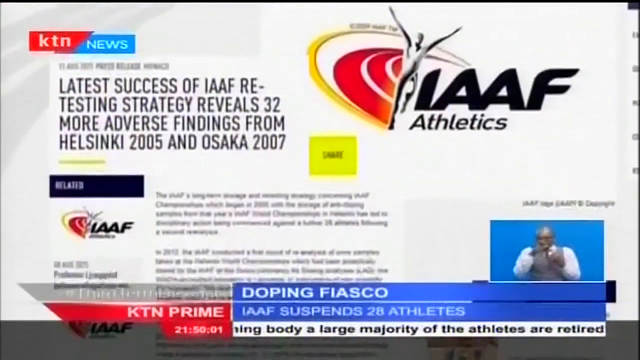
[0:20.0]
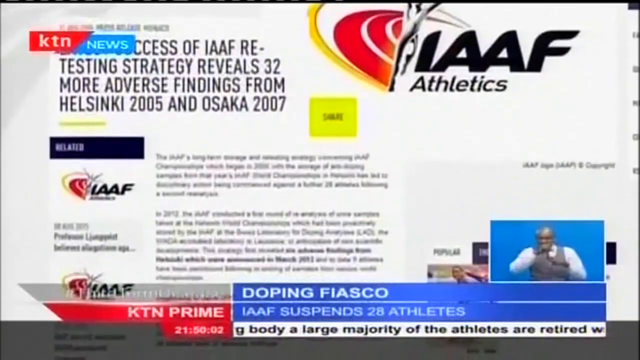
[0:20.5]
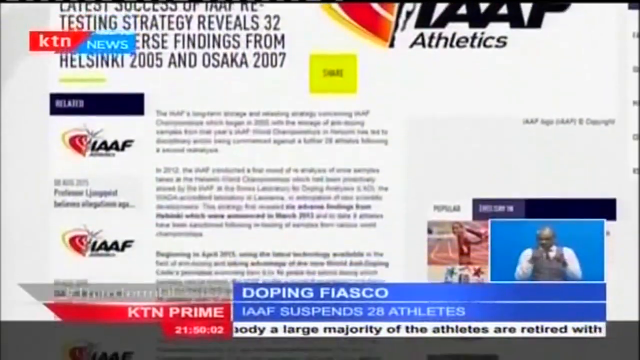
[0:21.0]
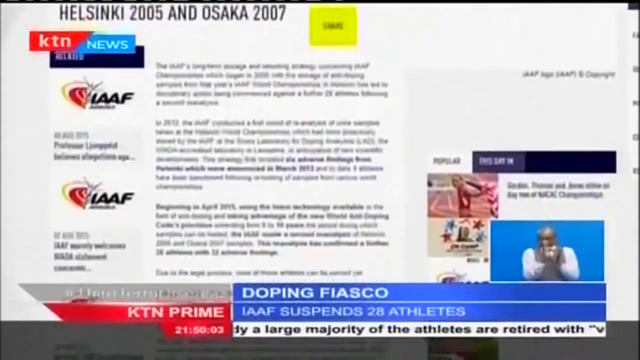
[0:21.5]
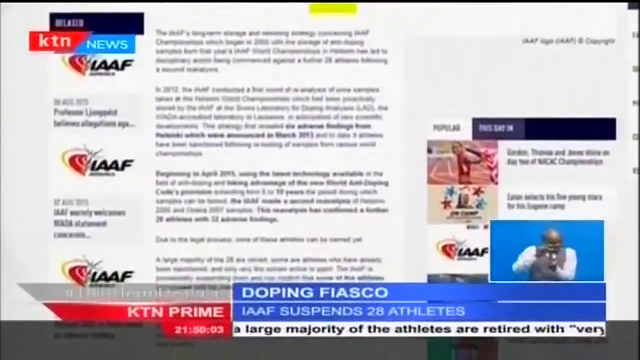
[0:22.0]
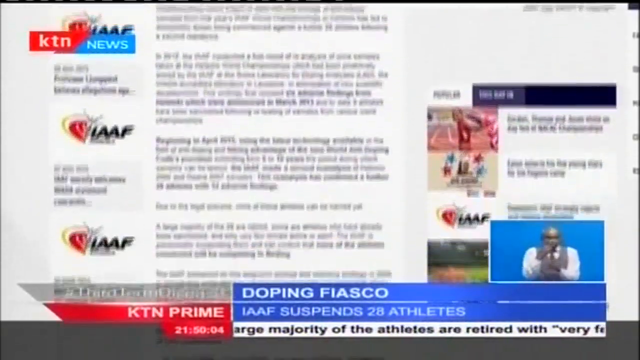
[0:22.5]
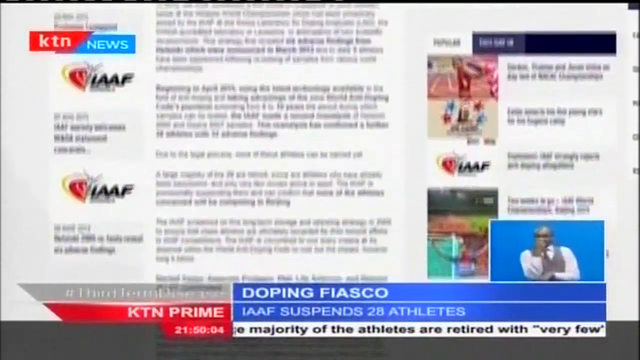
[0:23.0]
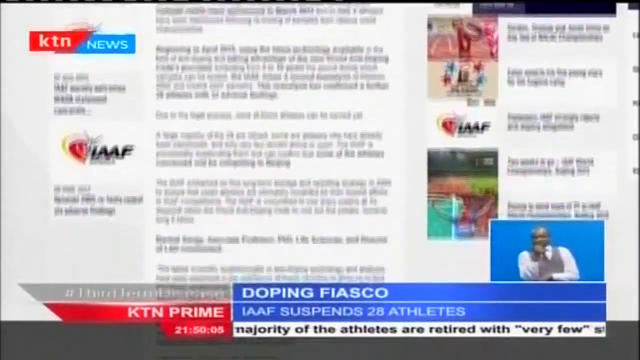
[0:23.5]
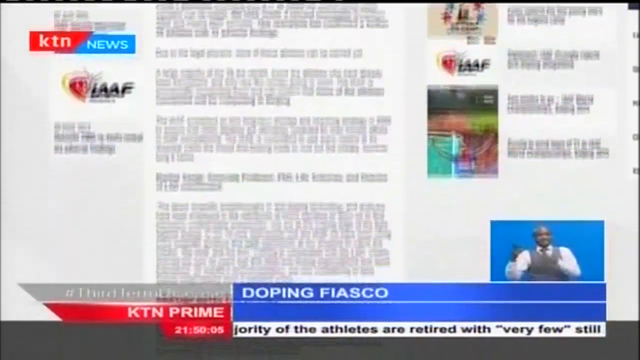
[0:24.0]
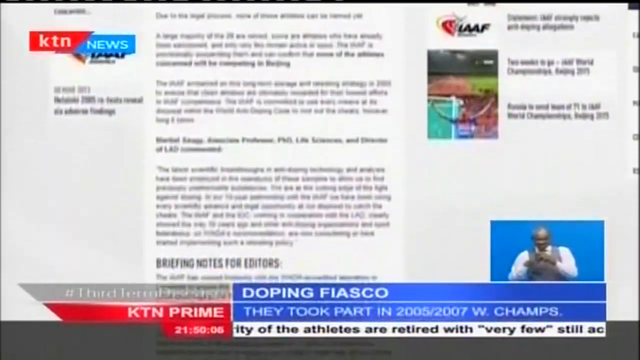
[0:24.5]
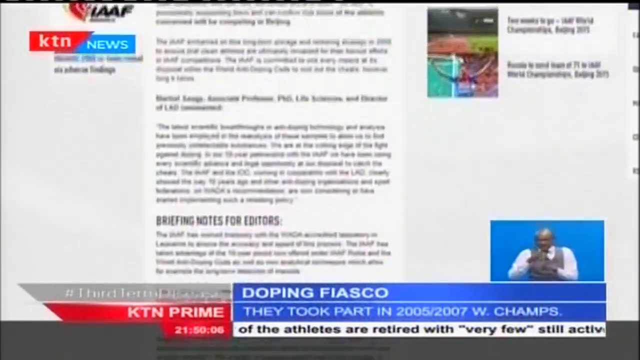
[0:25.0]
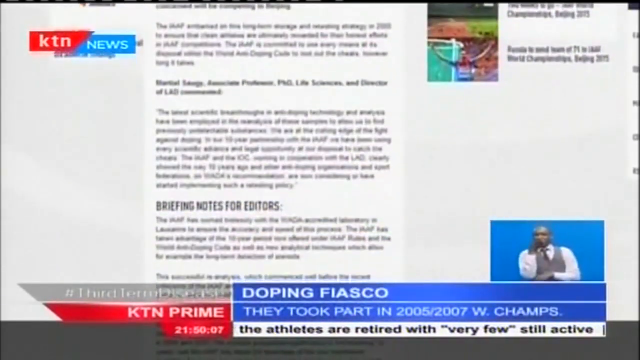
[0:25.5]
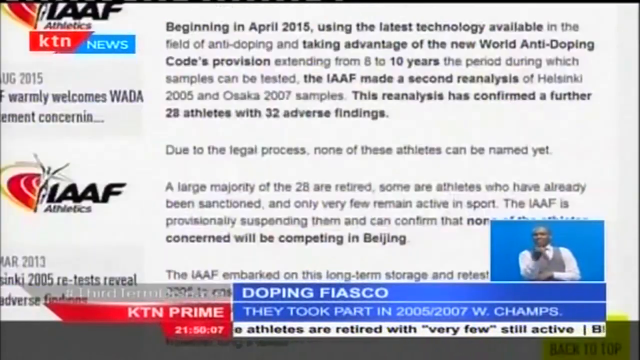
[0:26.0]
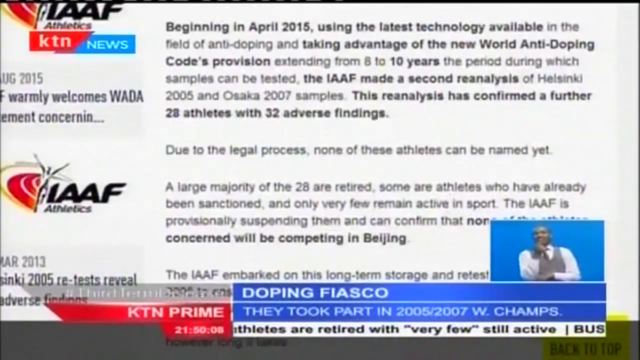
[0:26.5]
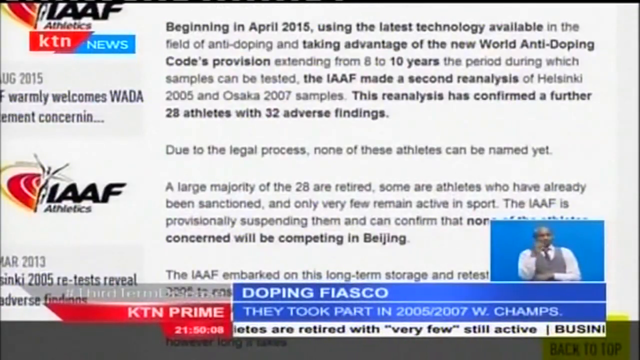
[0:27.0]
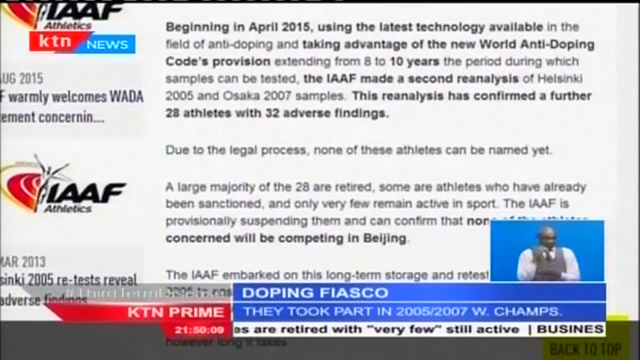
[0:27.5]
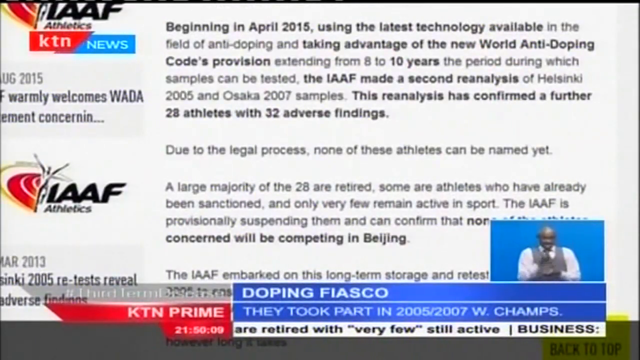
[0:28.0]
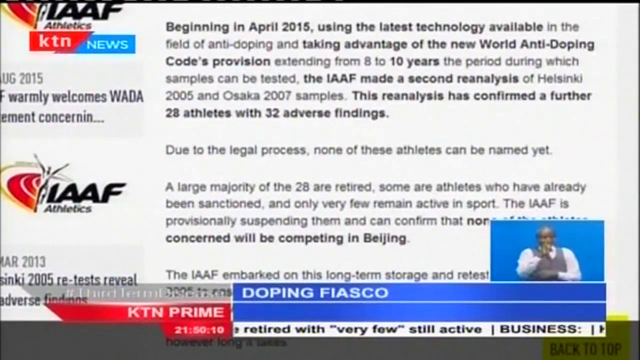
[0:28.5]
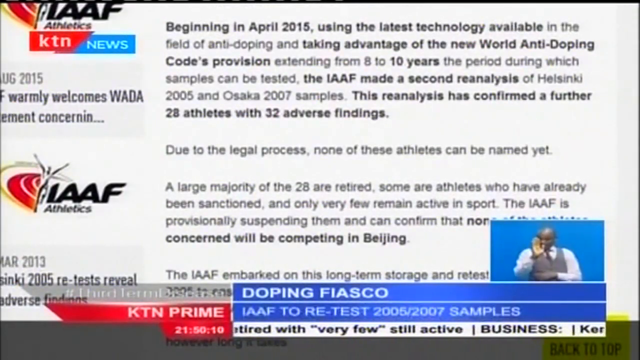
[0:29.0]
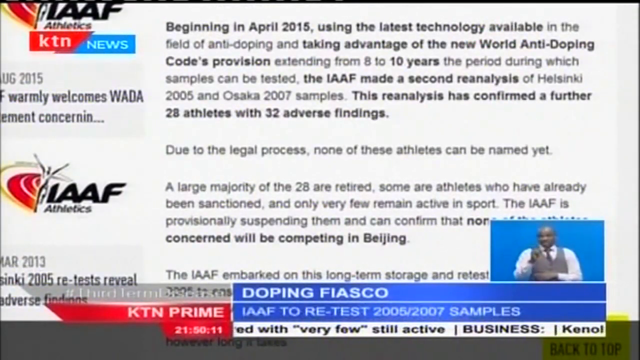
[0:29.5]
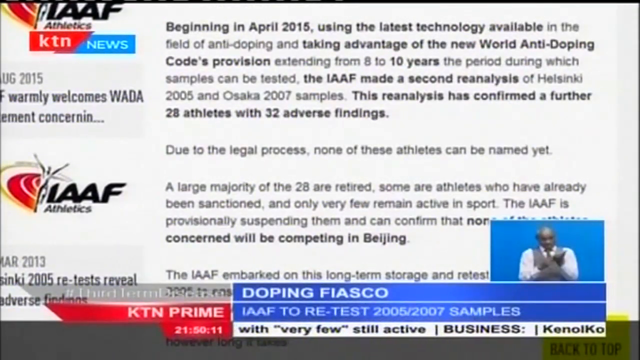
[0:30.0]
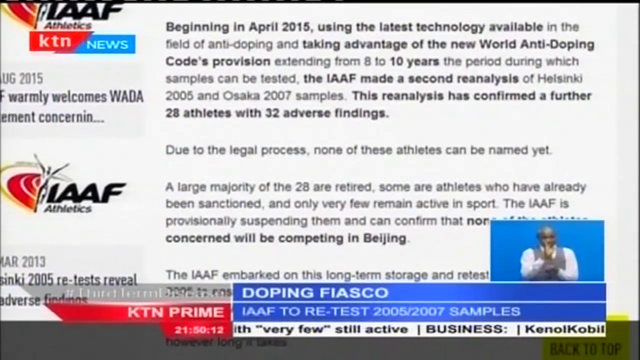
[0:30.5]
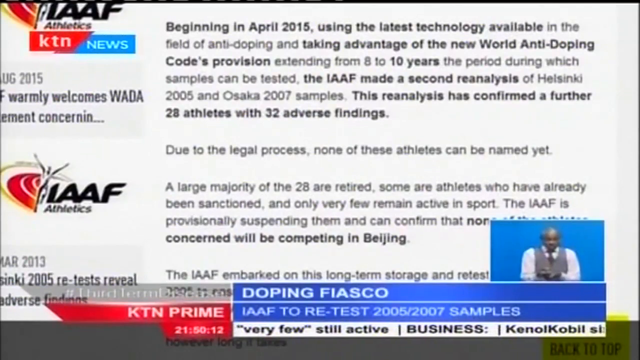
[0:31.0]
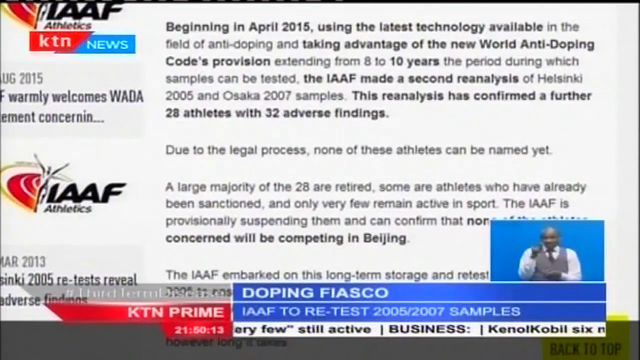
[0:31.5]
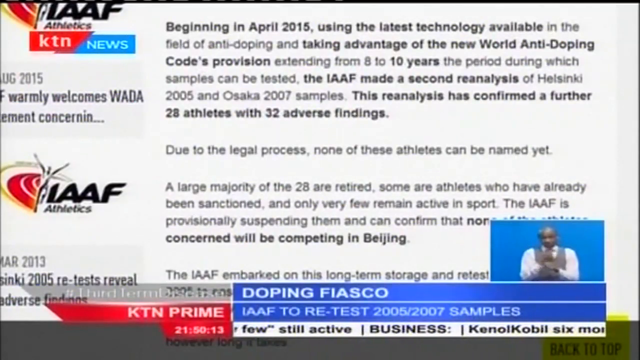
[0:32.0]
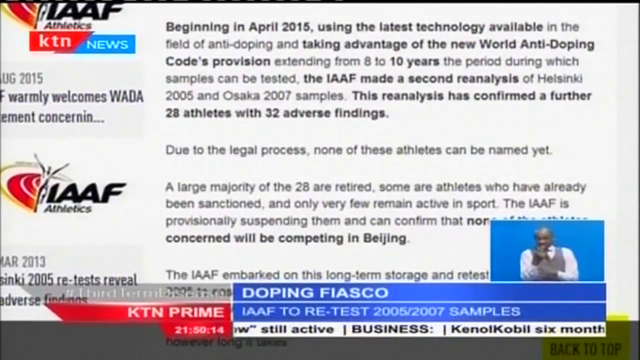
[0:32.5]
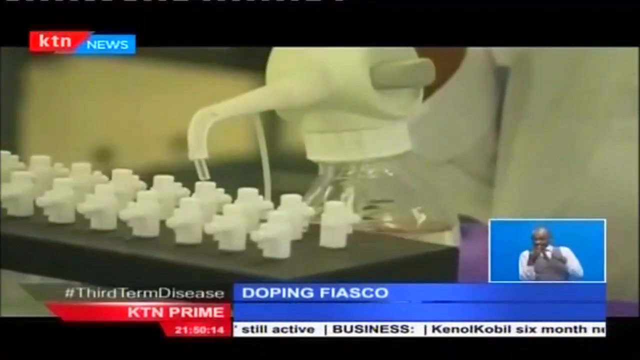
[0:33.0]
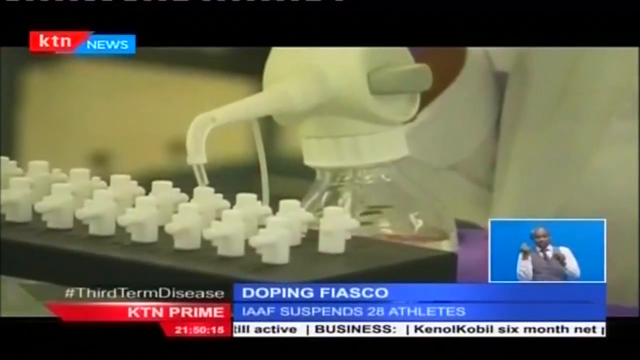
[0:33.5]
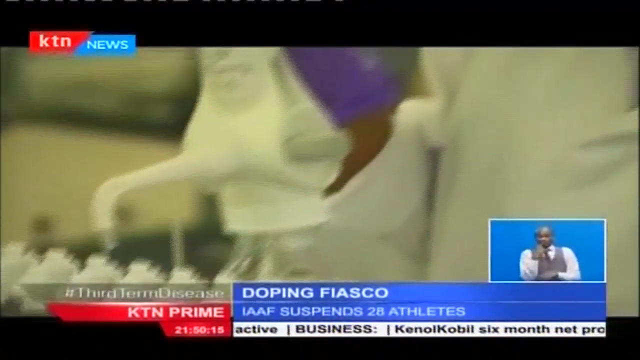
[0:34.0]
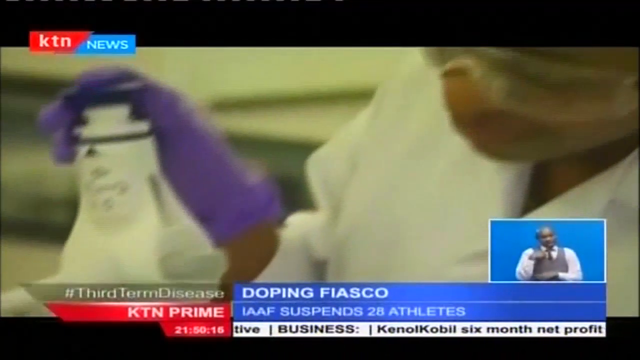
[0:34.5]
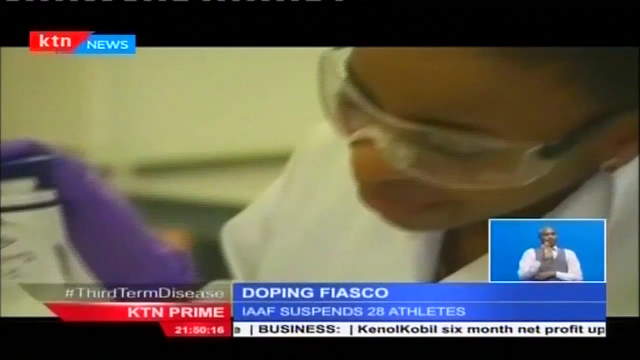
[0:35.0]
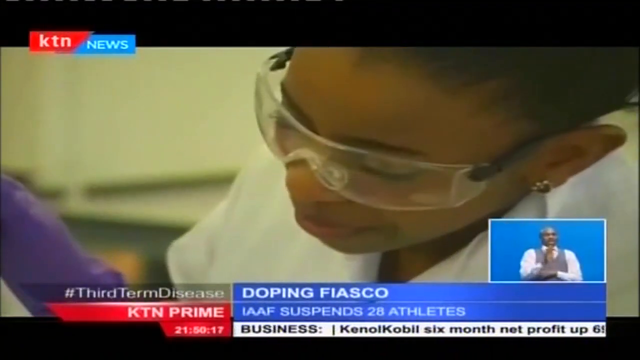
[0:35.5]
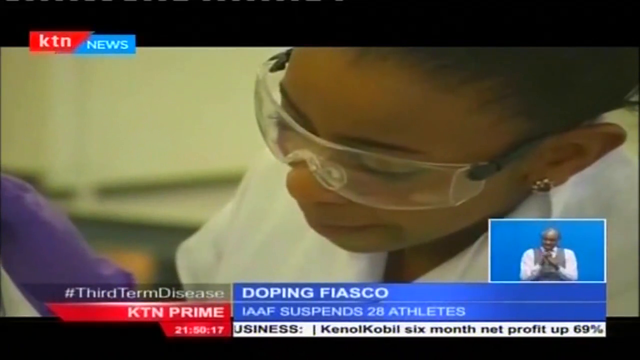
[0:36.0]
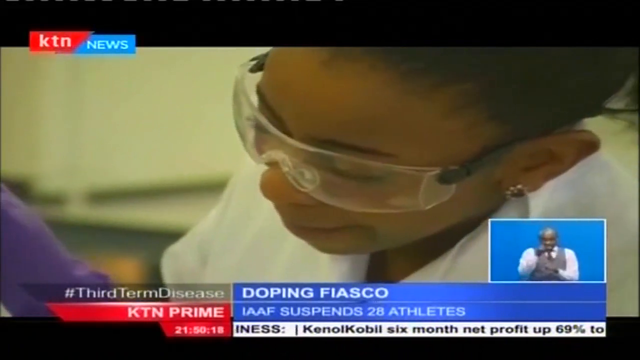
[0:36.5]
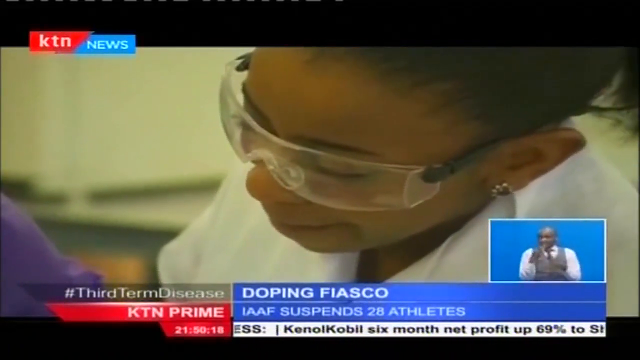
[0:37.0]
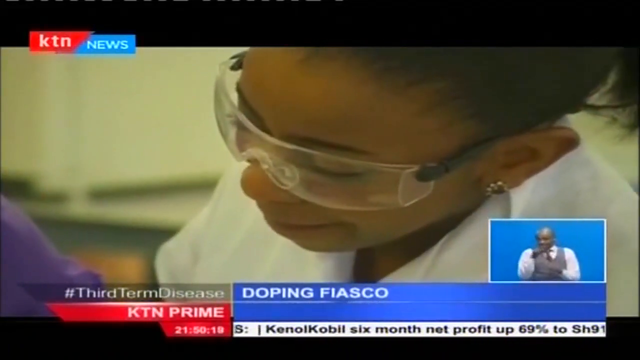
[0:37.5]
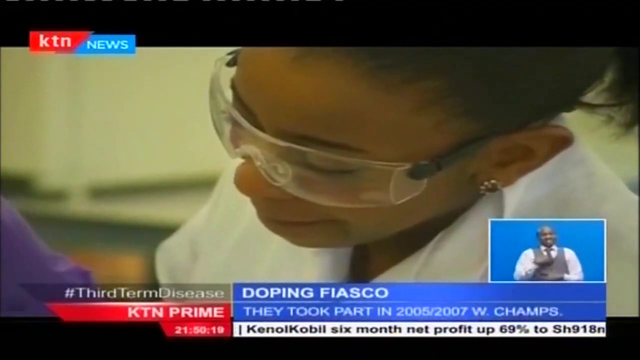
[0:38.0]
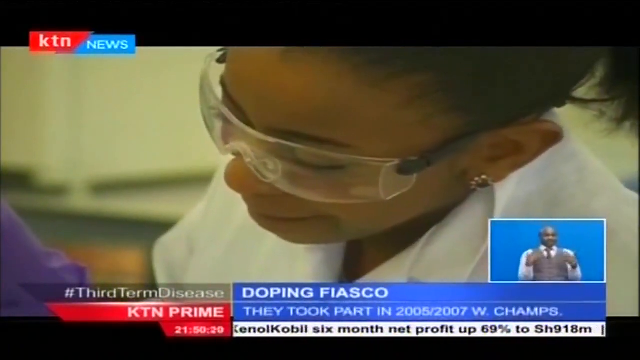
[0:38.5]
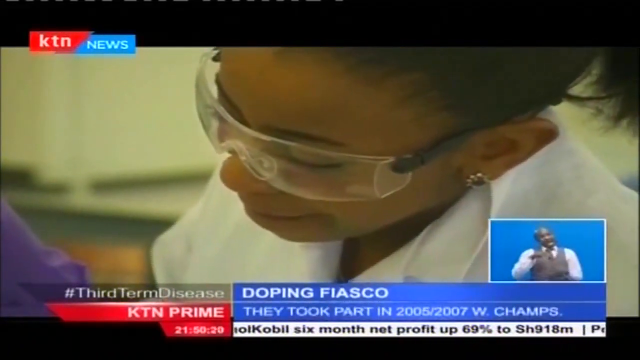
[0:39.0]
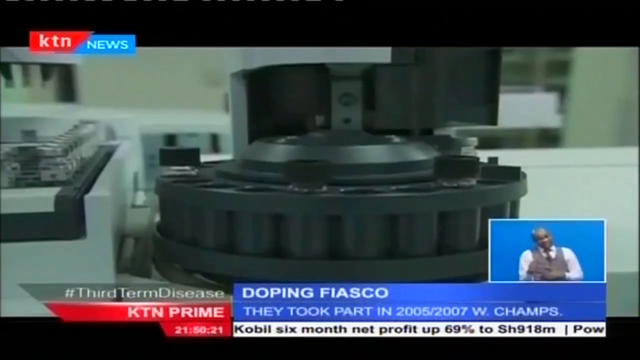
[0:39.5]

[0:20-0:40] The sign-language presenter continues interpreting while text is written on the screen, beginning "beginning of April 2016, using the latest technology available in the field of antidoping". The text goes on to mention a second re-analysis of samples and says that, due to legal process, none of the athletes can be named yet. People are then seen observing.